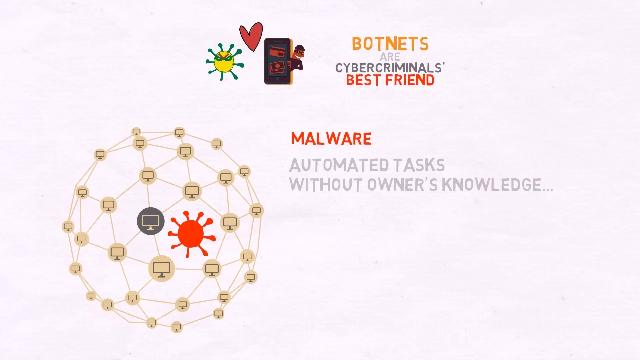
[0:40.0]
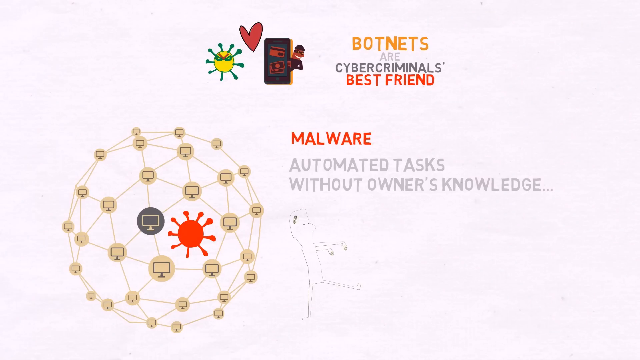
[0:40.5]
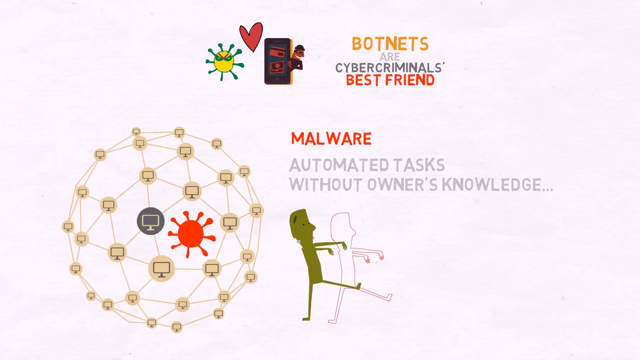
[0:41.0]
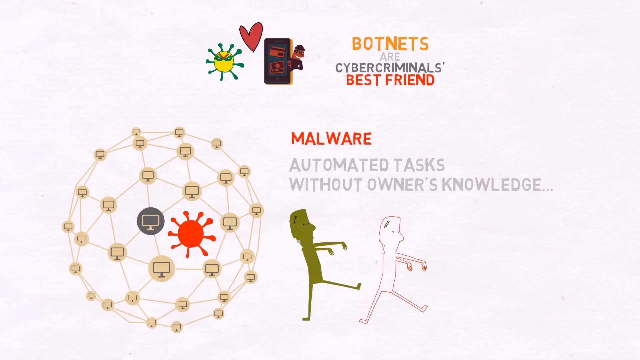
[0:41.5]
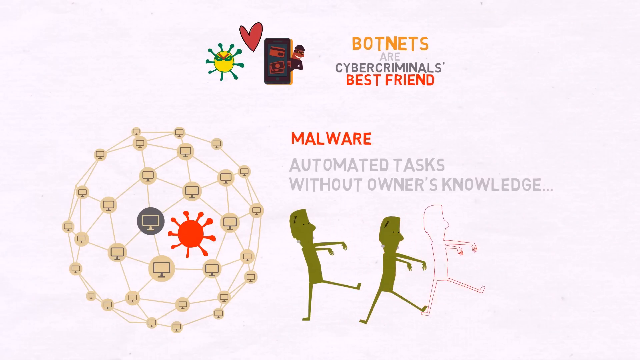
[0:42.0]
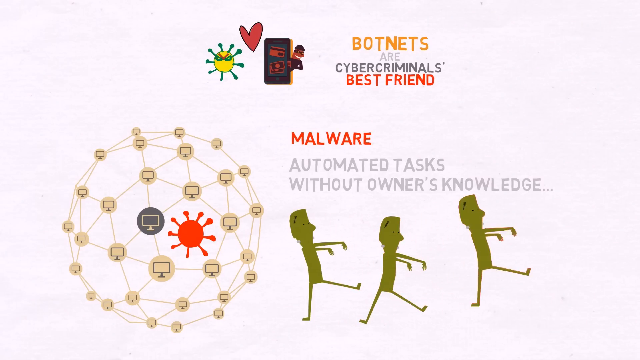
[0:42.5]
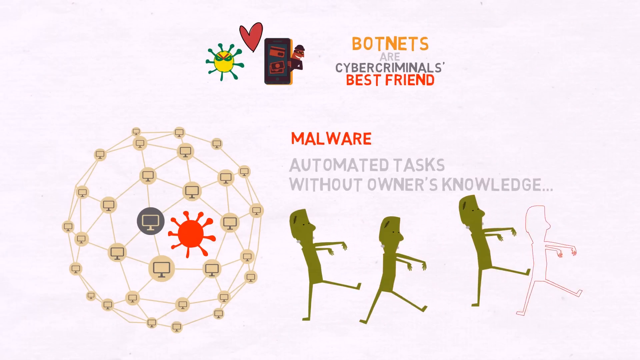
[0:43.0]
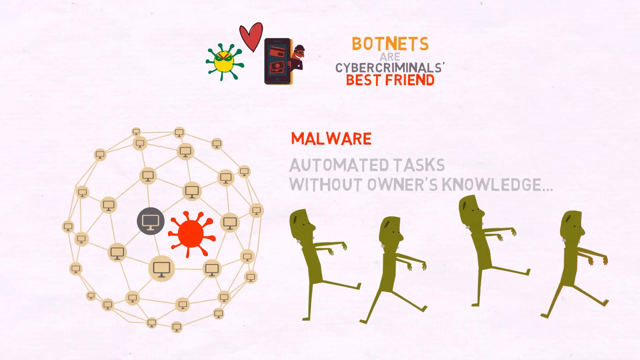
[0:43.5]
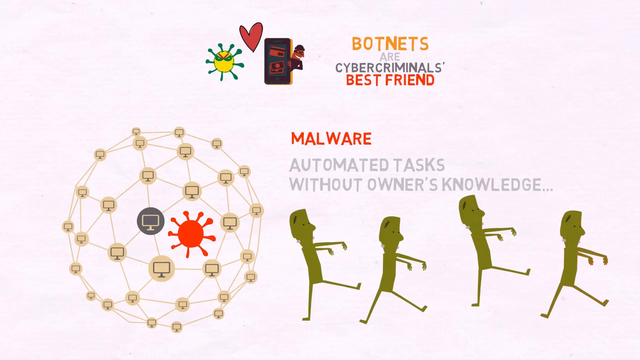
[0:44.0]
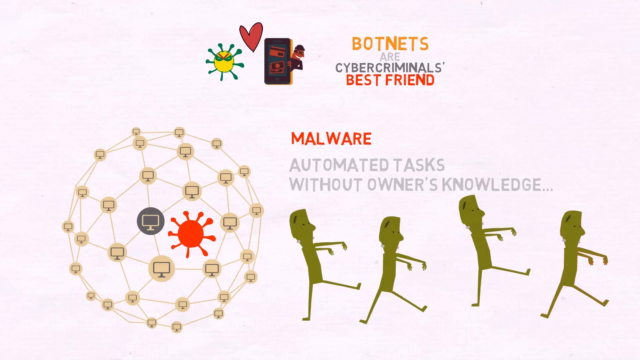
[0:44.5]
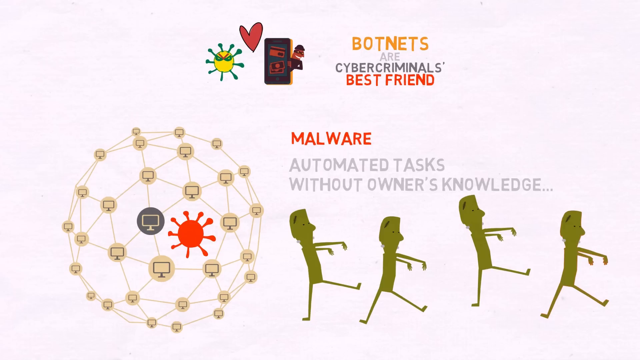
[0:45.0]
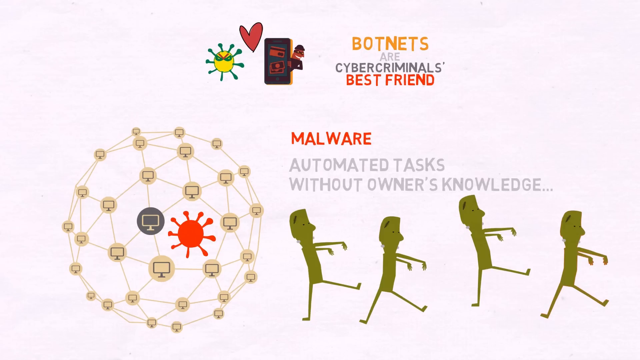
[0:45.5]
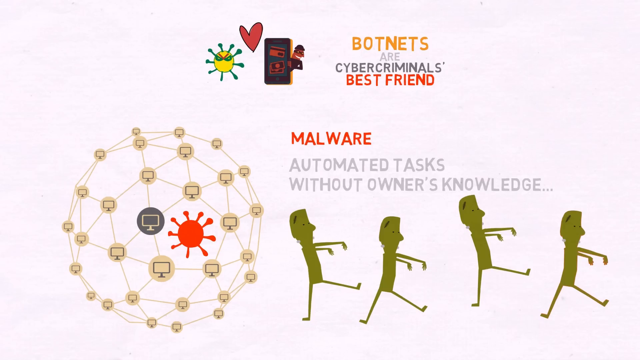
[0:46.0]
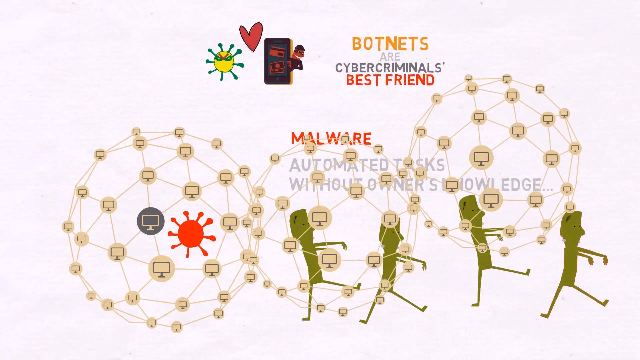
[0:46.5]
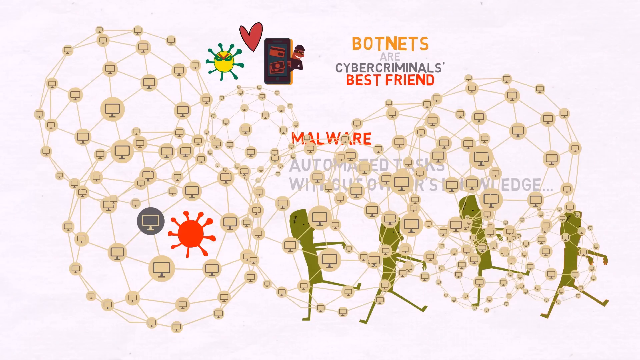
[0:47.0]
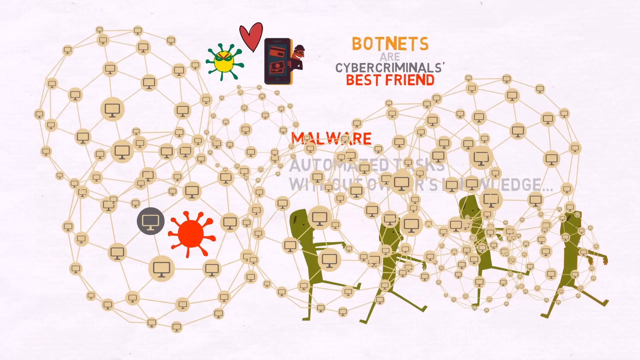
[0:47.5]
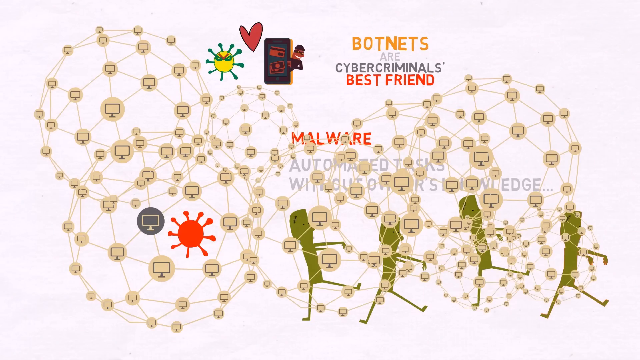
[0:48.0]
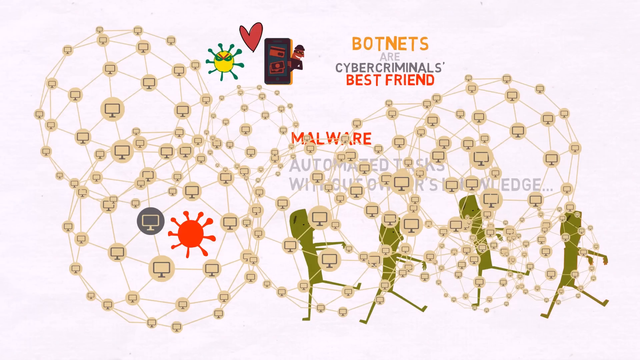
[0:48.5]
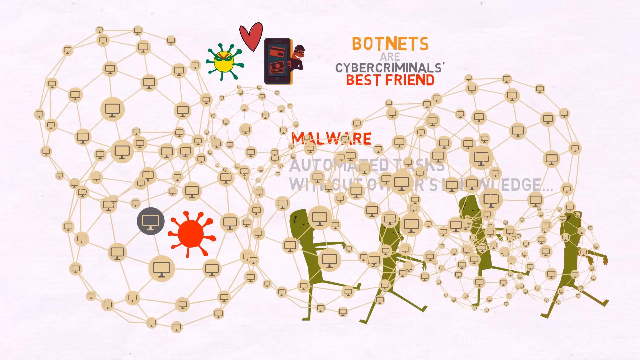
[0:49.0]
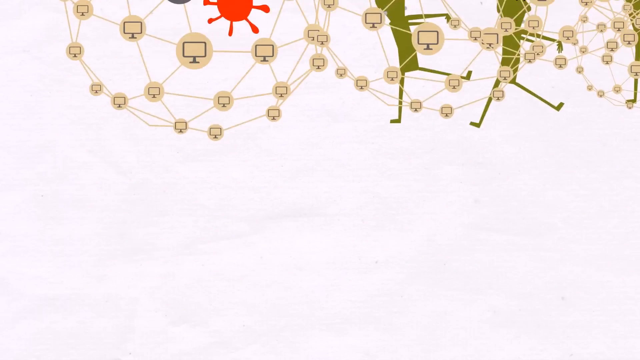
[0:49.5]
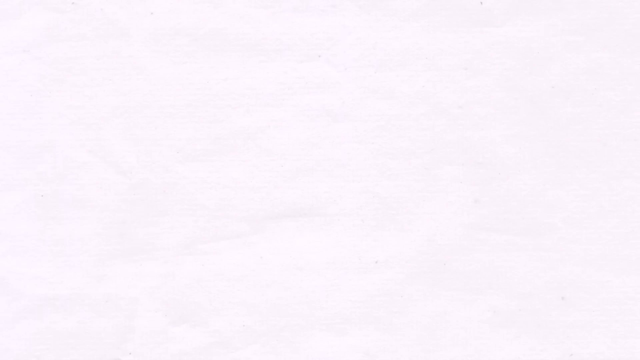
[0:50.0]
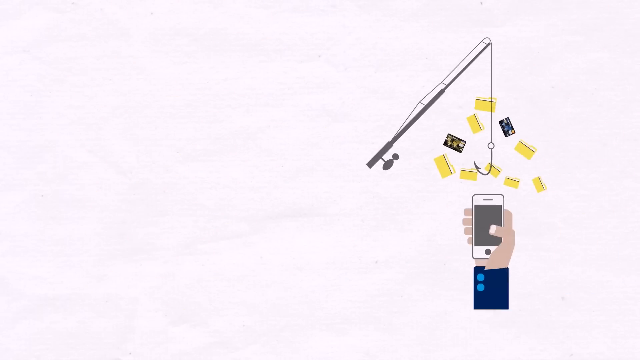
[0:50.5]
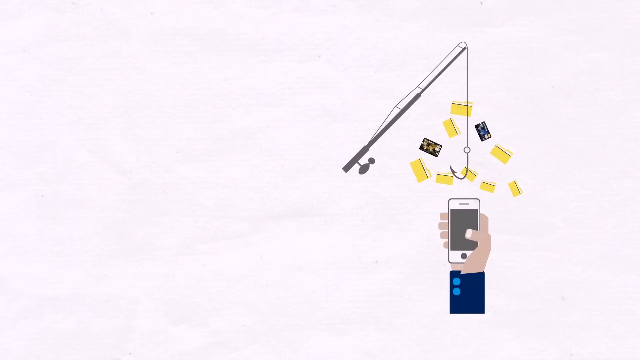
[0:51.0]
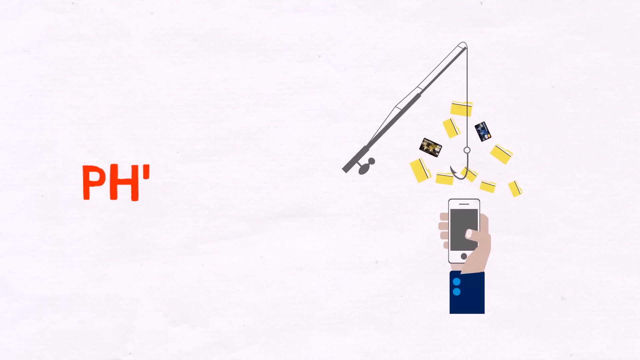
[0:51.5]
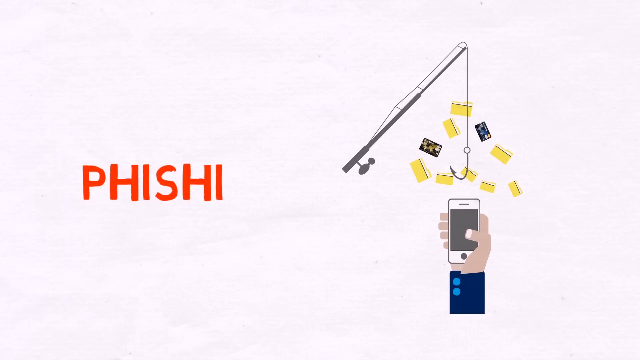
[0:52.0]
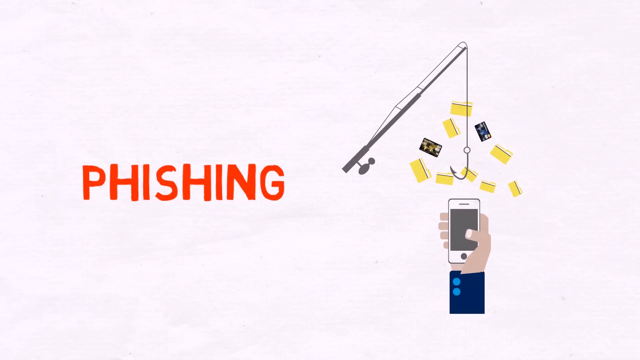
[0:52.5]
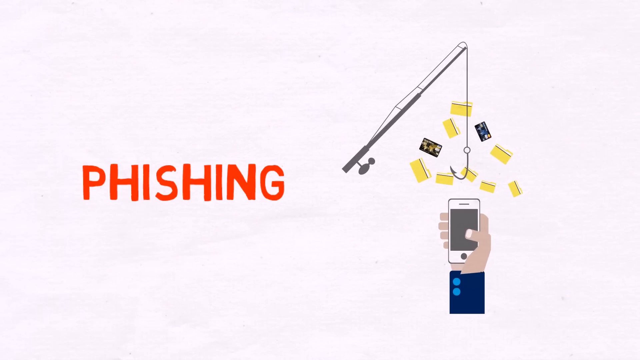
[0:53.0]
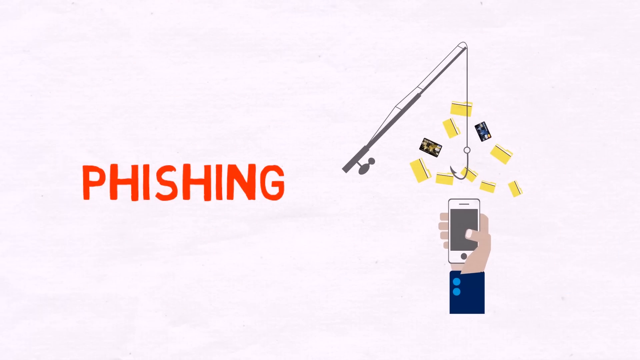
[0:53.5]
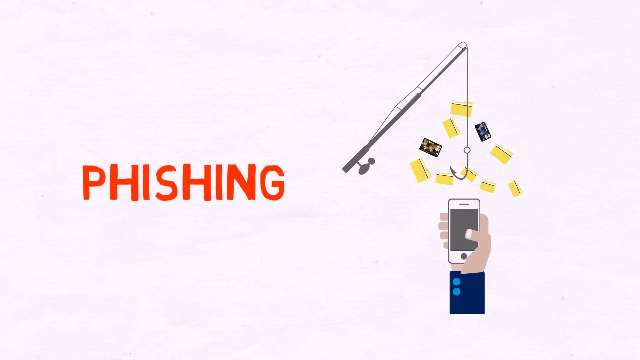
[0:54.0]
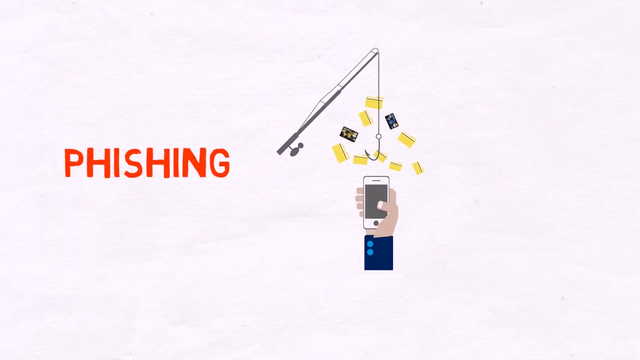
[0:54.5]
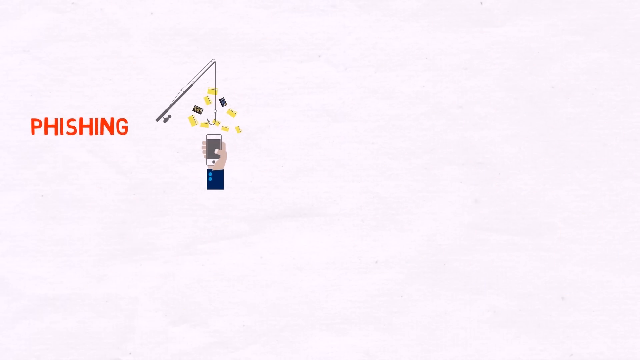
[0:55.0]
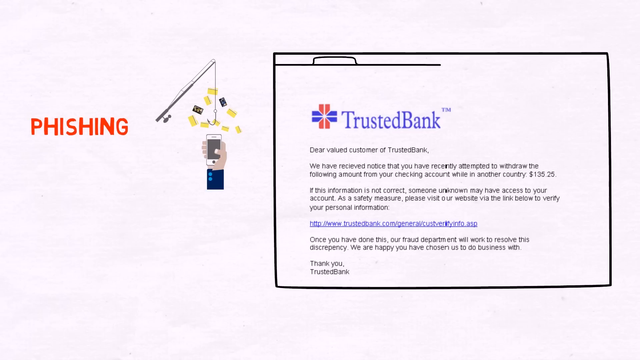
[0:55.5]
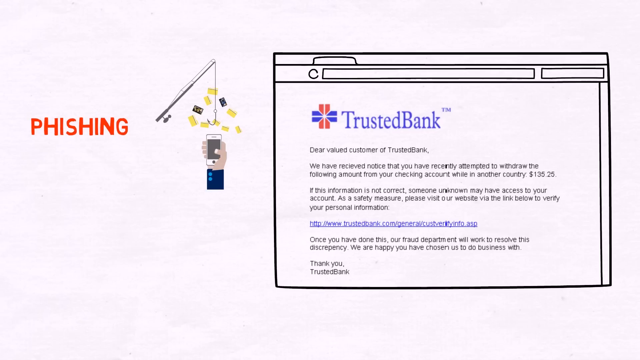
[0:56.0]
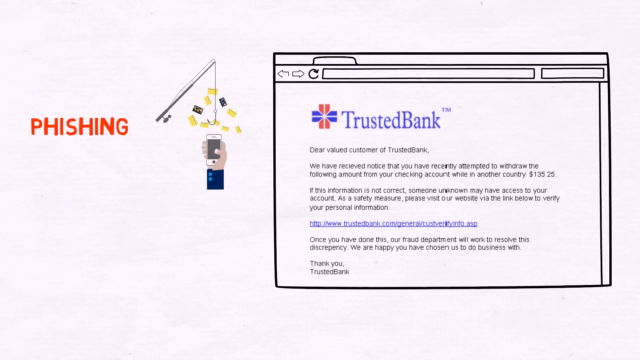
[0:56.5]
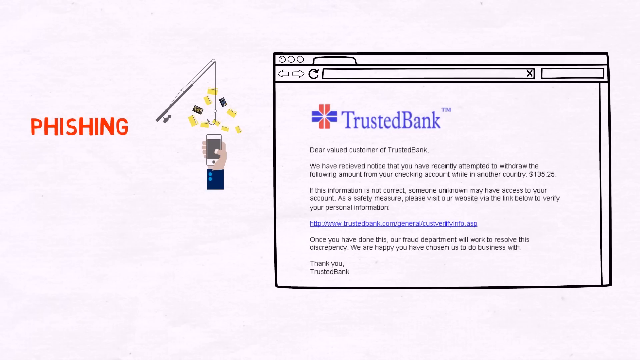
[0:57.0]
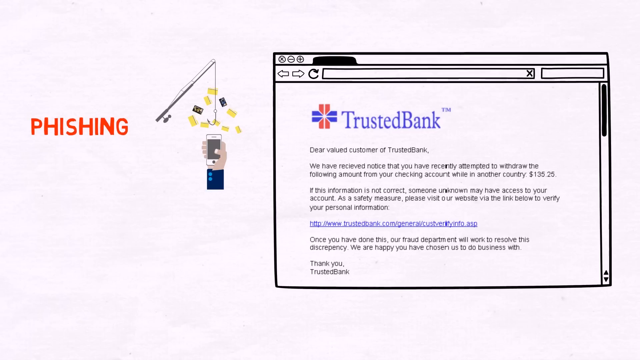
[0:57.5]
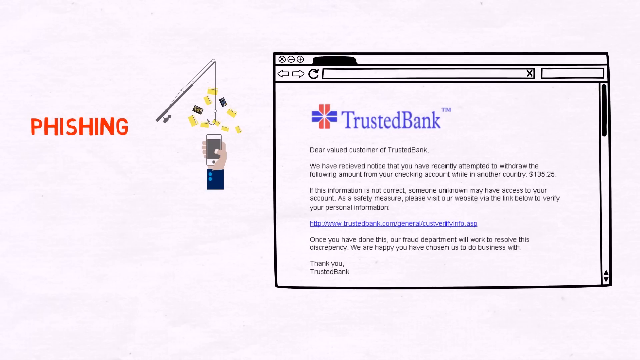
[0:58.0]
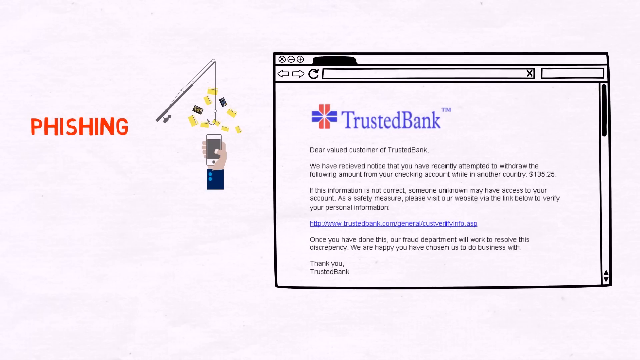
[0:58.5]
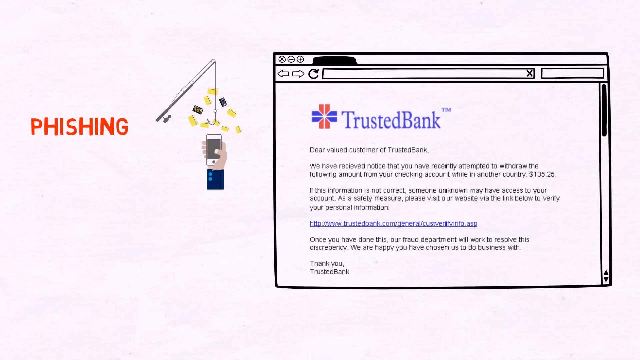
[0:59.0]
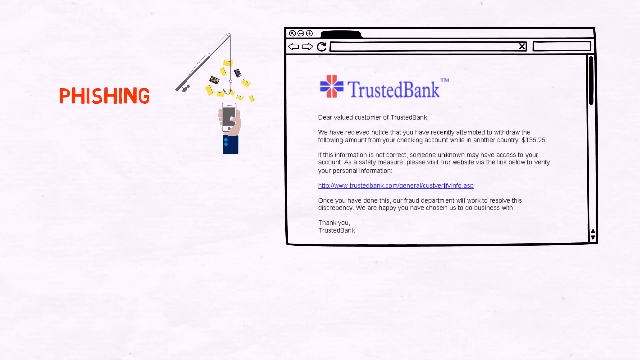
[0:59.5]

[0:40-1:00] On a white background, an elaborate spider's-web-type circle sits in the bottom left of the screen, stretching towards the centre and maybe to just above centre vertically; its circular shape seems as if it might represent the globe. At each point of the diagram there is a screen in a circle. Most of these circles have a pale brown background, but the one in the centre has a dark background with a pale brown screen, the opposite of the others. To the right of it is a red circle with various tentacles stretching out, and to the right of that is the text "malware" in red with "automated tasks without owner's knowledge" in grey below. At the top of the screen is a similar tentacled image, this time just inside the top left: a yellow circle with a green border, green tentacles, green eyes and a red V above the eyes at the top of its head. Next comes a red love-heart-type shape, and beside it what might be a doorway, or possibly a mobile phone screen, featuring a credit card and notes. An individual sticks out to the right of that, smiling and wearing a hat, a mask and a black top. To the right is the text "Botnets are cyber criminals best friend". At the bottom right, to the right of the globe-like web diagram, green zombie-like creatures appear with arms outstretched and the left leg drawn as a matchstick with a foot on the end, appearing as if with no control, supporting the text about automated tasks without the owner's knowledge.